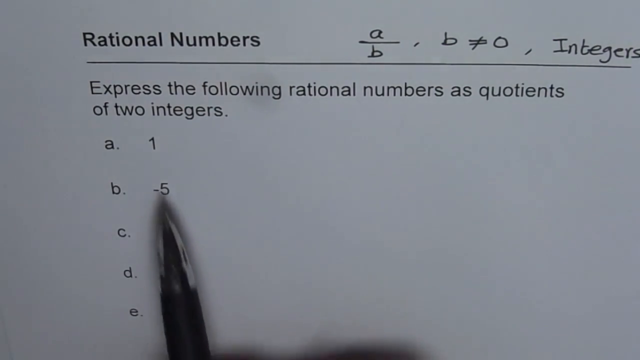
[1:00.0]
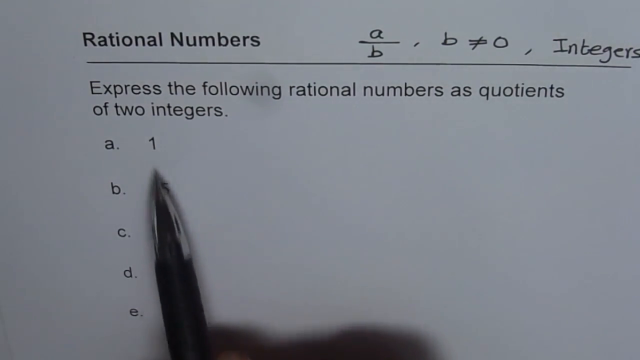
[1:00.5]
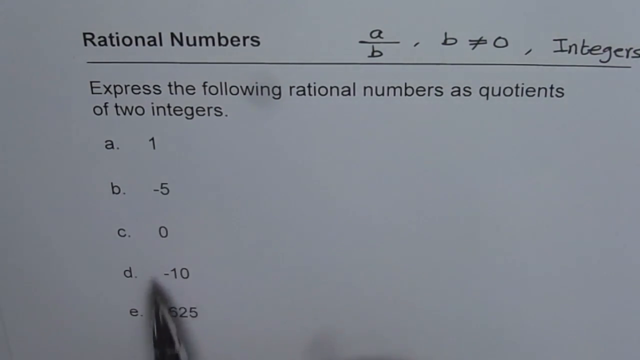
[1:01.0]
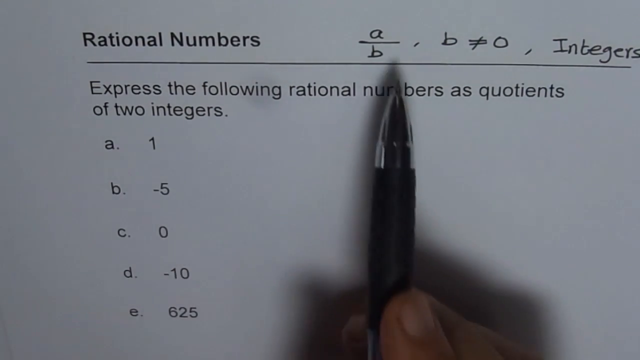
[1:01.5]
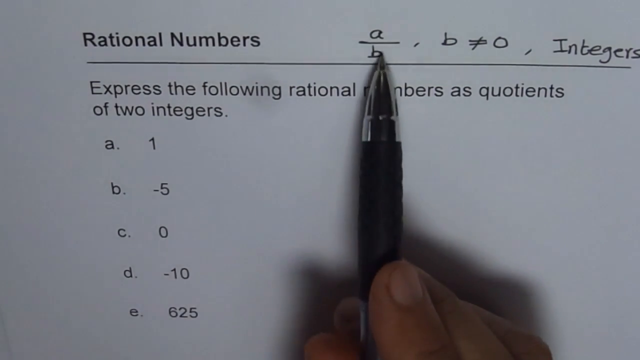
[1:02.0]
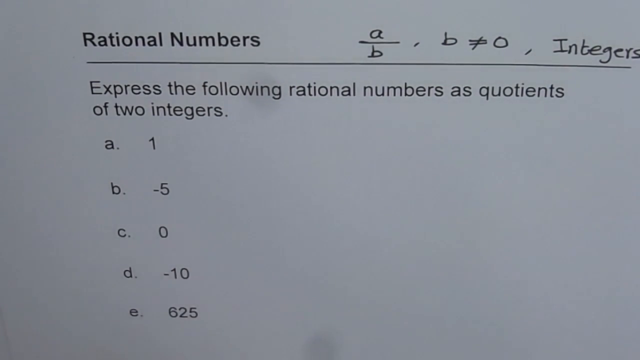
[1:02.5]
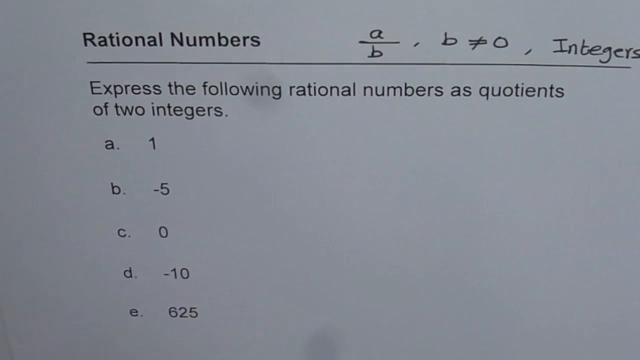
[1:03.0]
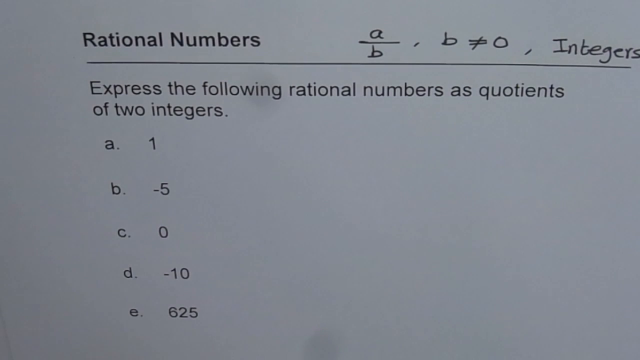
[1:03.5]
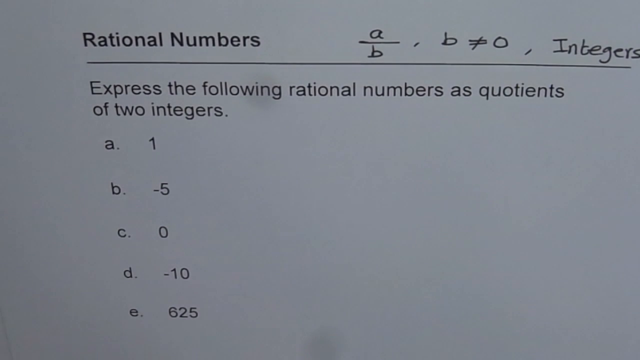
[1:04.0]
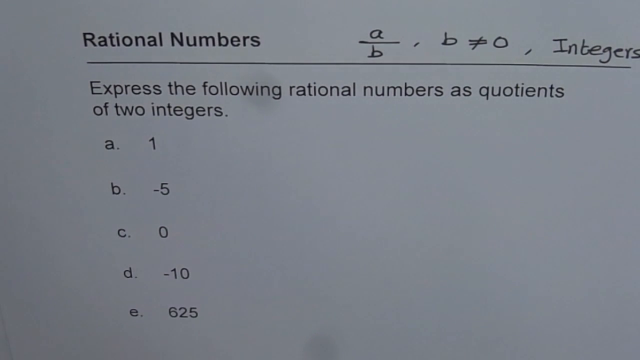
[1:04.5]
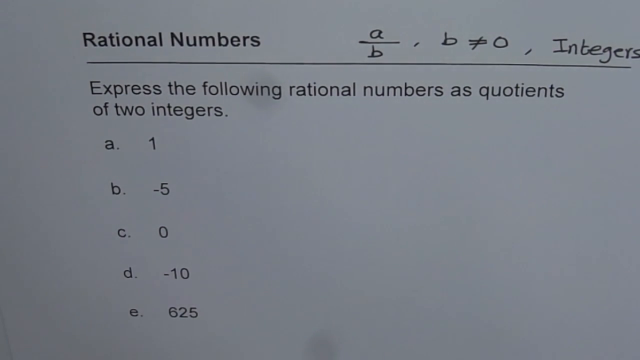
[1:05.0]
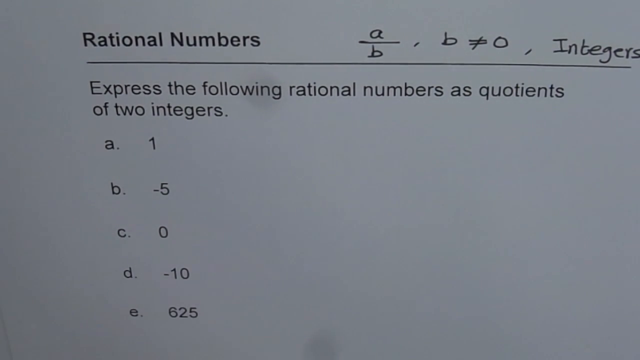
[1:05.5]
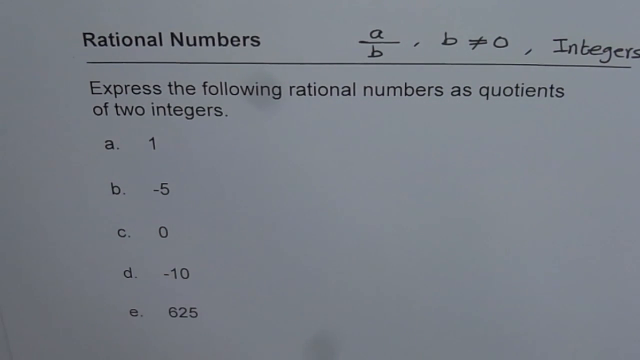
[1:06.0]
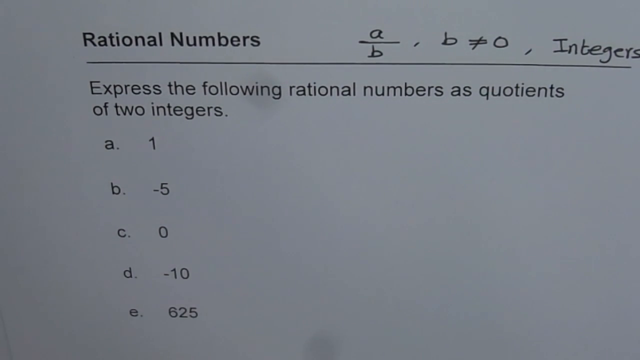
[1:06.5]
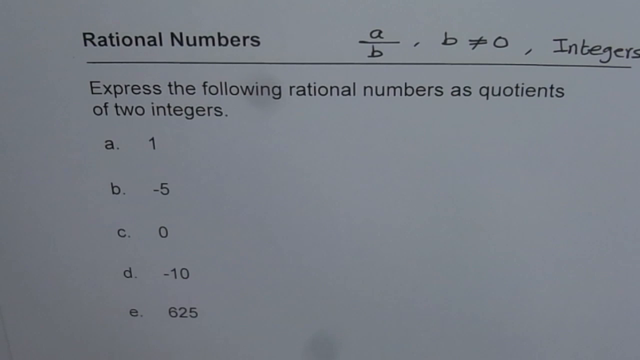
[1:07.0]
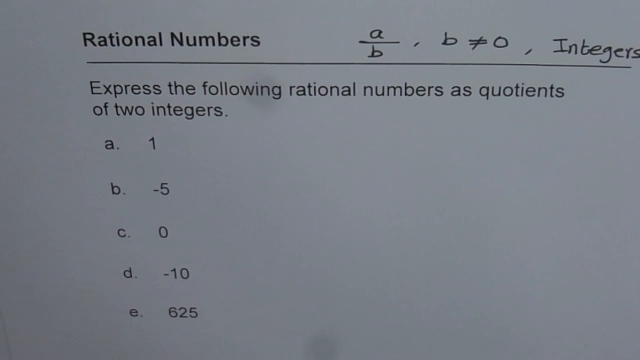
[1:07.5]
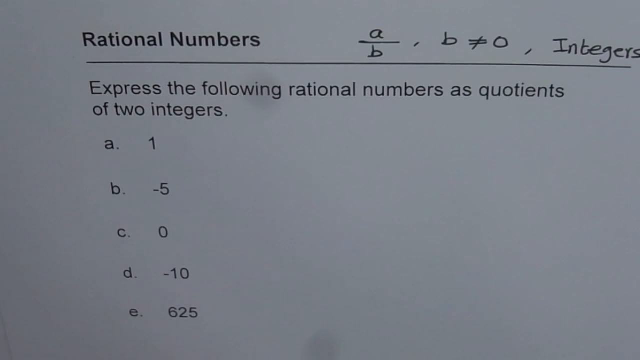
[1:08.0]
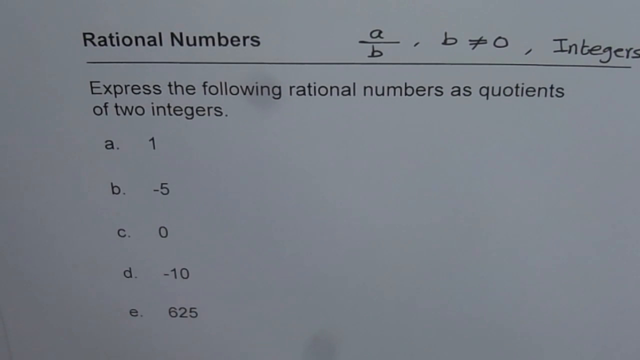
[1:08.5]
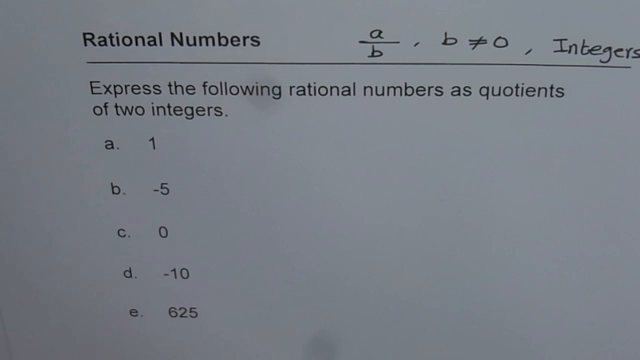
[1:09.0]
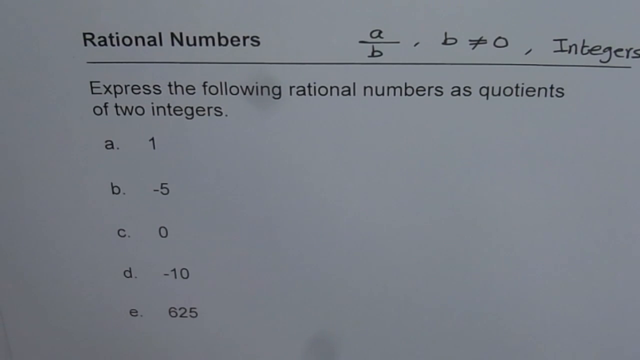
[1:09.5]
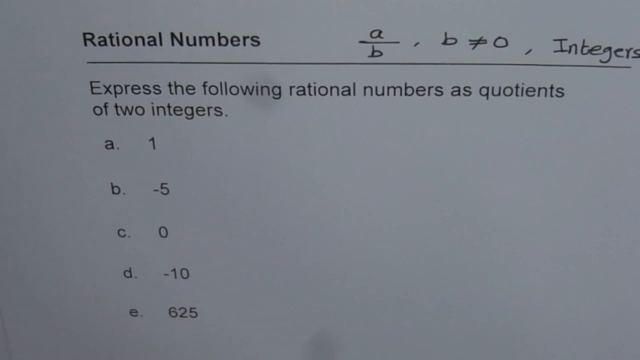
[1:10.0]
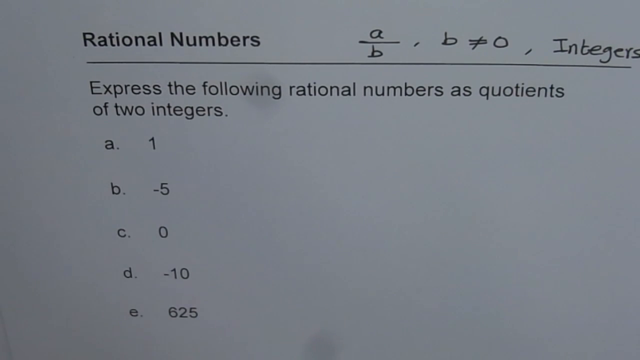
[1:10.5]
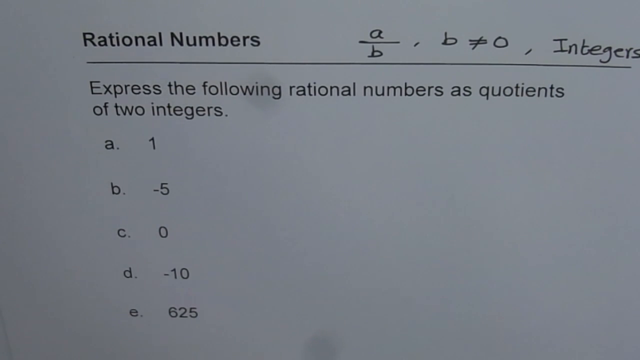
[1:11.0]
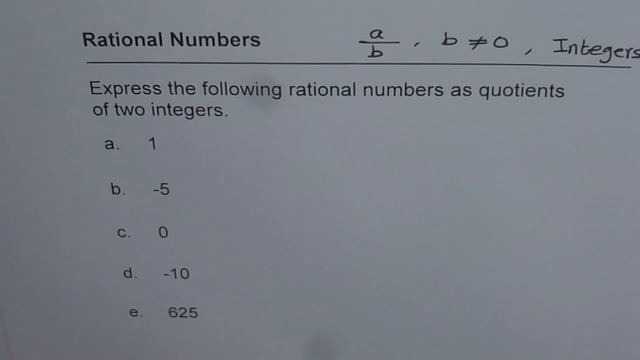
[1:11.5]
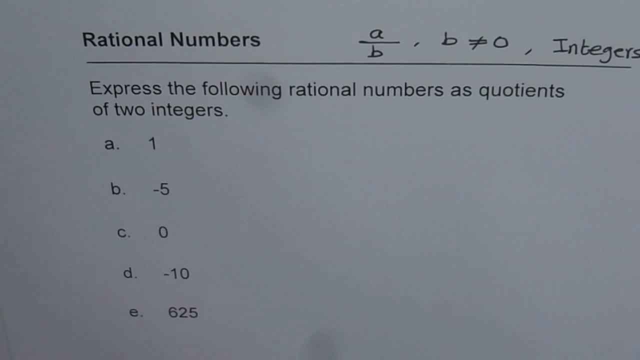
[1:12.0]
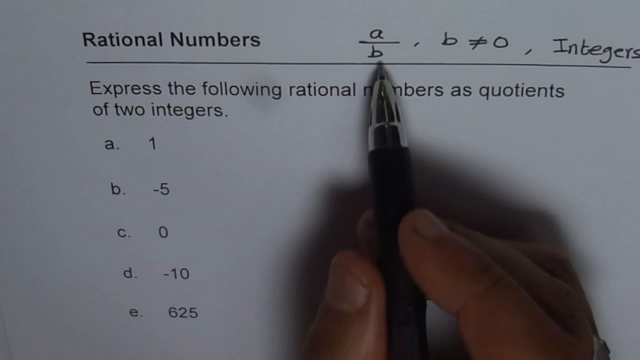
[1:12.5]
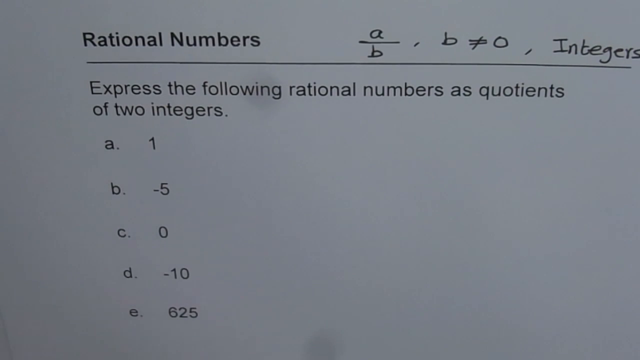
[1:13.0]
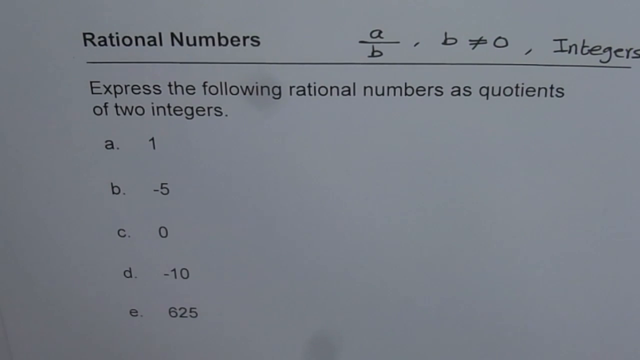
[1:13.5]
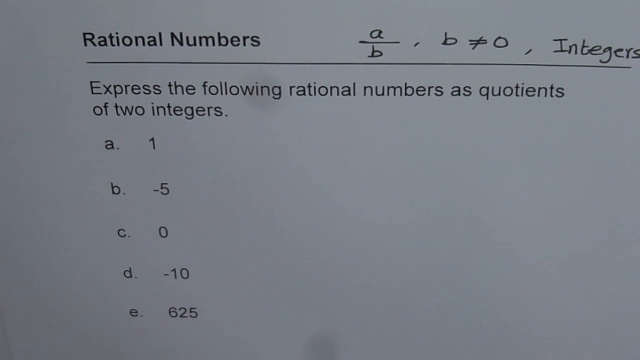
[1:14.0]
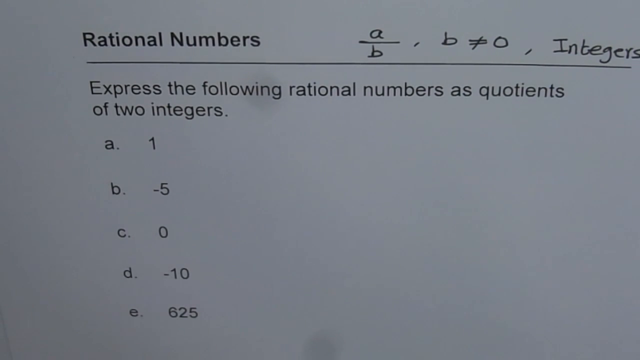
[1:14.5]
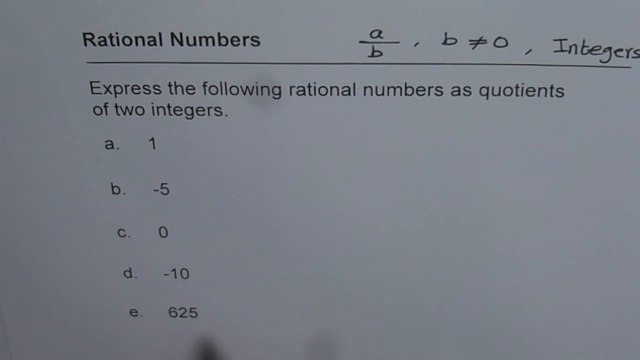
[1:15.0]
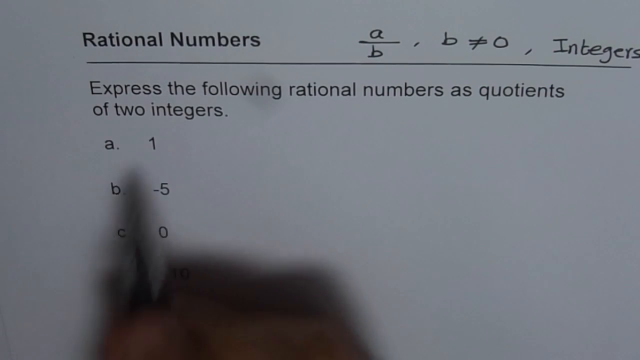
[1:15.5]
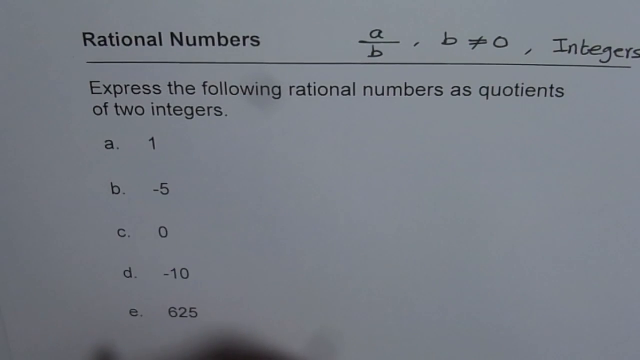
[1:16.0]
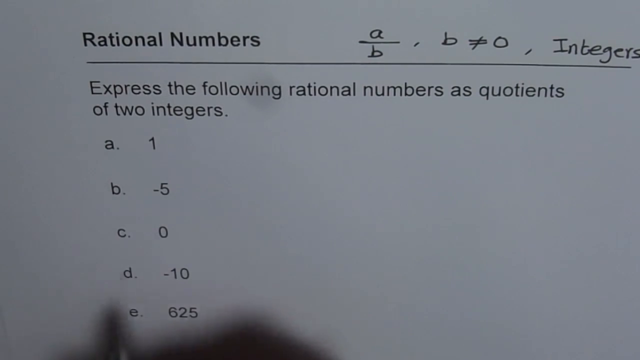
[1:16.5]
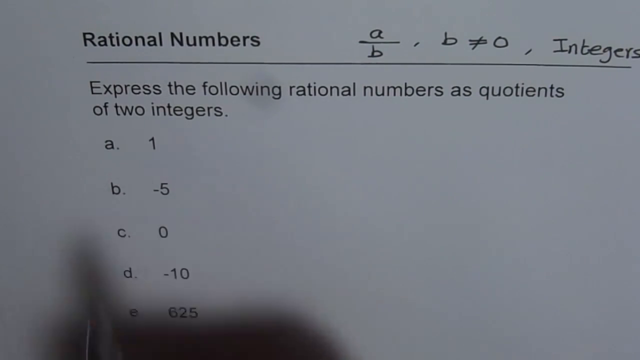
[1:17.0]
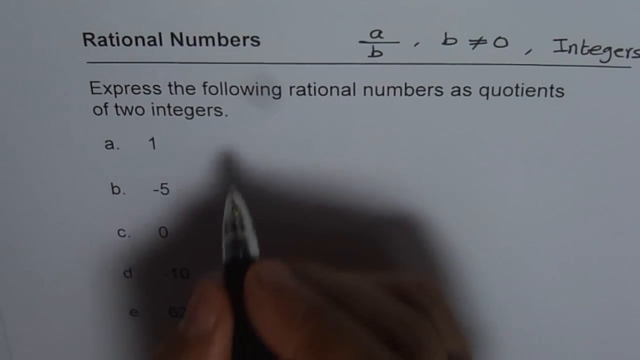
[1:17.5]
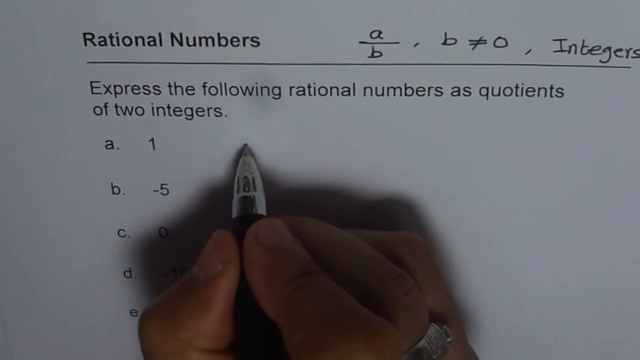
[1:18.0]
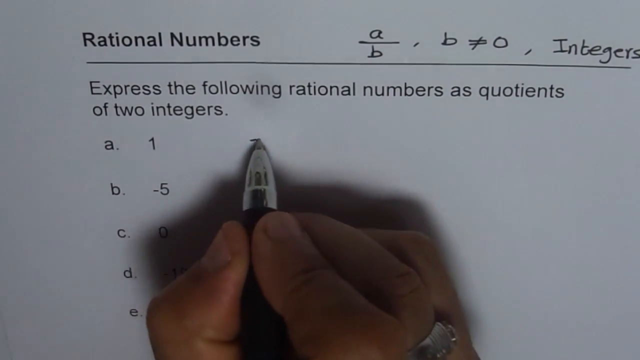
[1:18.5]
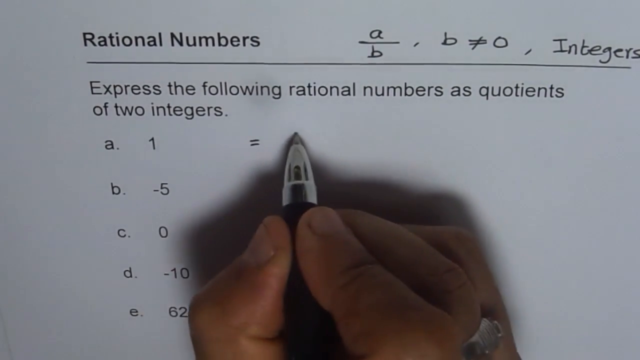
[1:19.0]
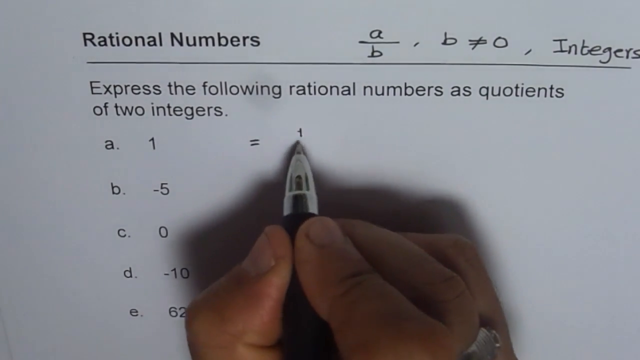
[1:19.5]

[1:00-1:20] The person touches the numbers to be expressed as quotients of two integers with the tip of the pen, then moves the pen back to what is written at the top of the page, pointing at the a over b, written as an a, a line, and a b under the line. He moves the hand out of the picture, as if possibly waiting for students to answer. The hand pops back in, quickly touches the a over b, and moves away again. It then slowly enters the picture, touches the number one, writes an equals sign to the right of the one, writes a one, and makes a little stripe underneath it.